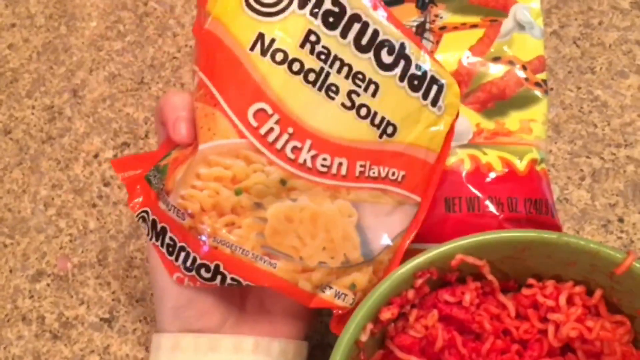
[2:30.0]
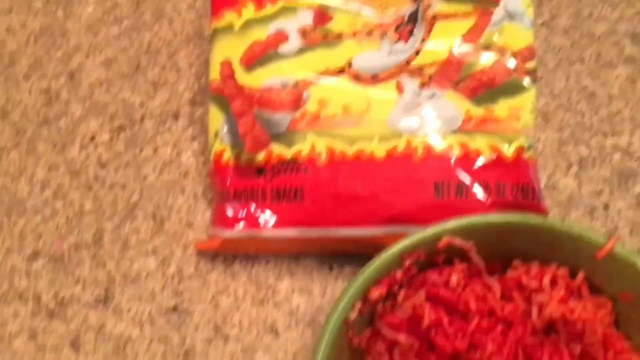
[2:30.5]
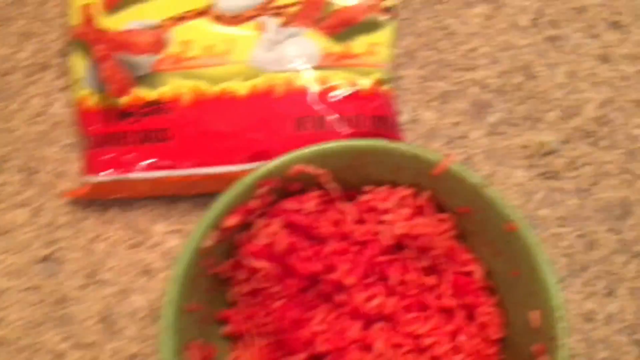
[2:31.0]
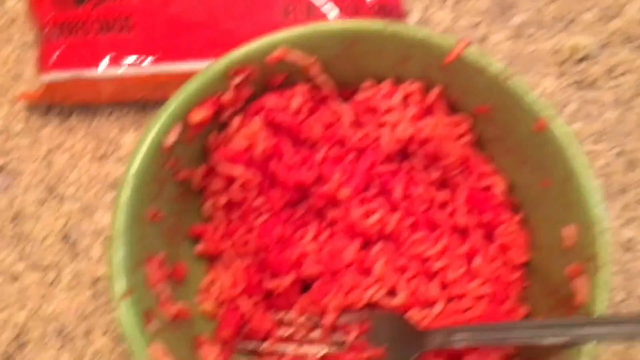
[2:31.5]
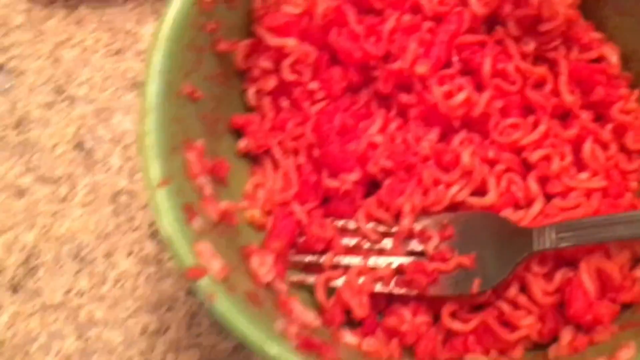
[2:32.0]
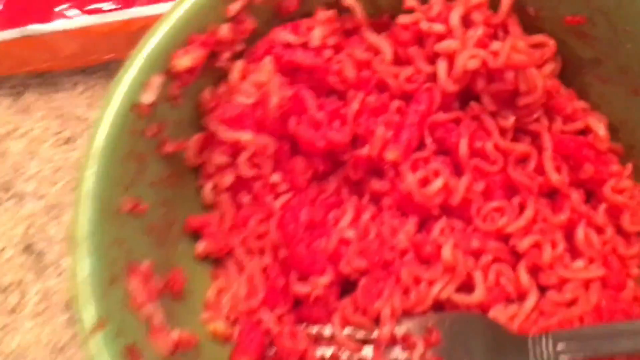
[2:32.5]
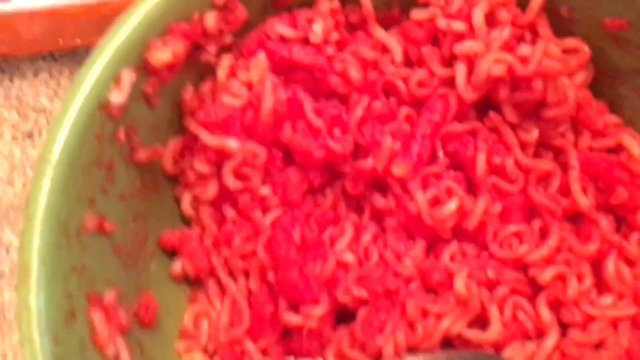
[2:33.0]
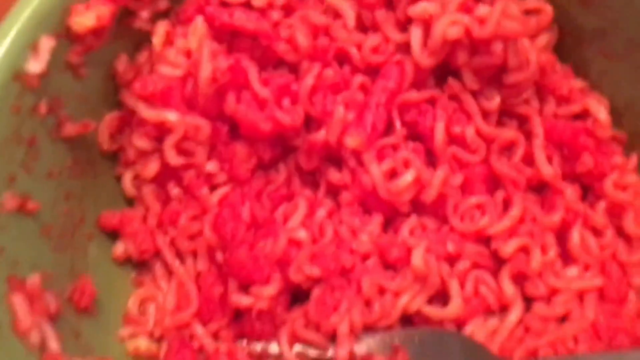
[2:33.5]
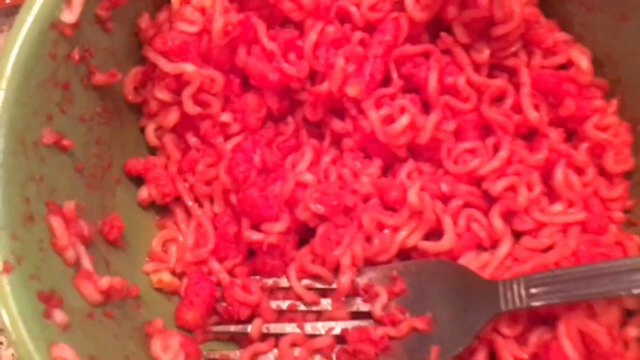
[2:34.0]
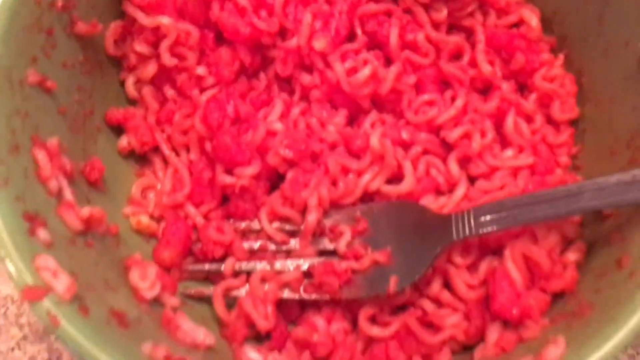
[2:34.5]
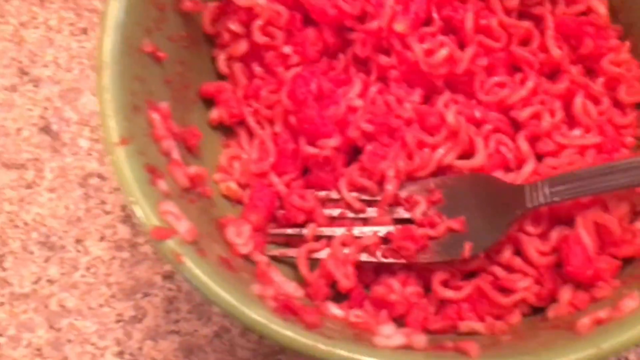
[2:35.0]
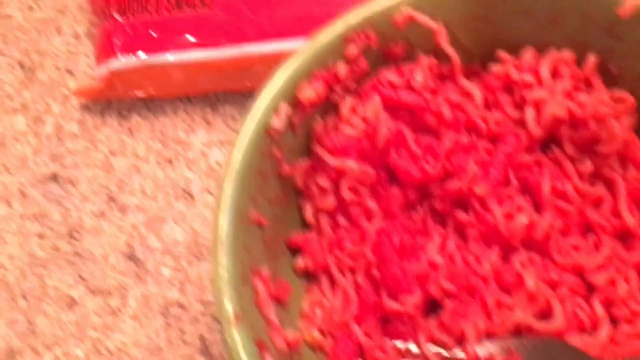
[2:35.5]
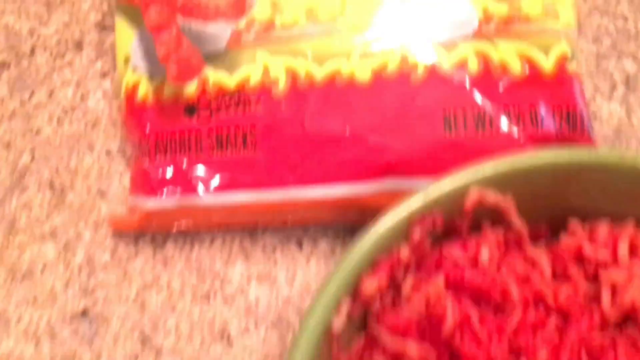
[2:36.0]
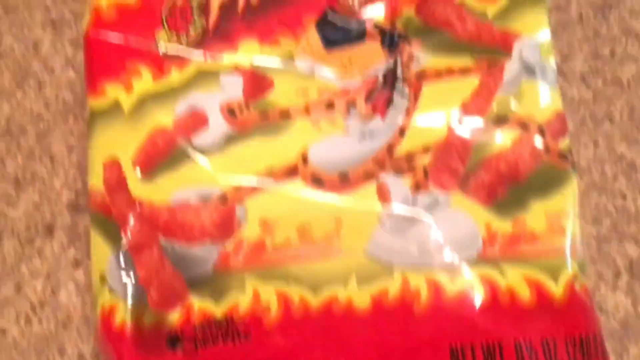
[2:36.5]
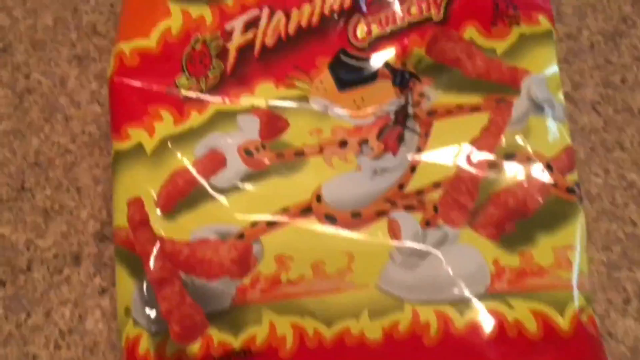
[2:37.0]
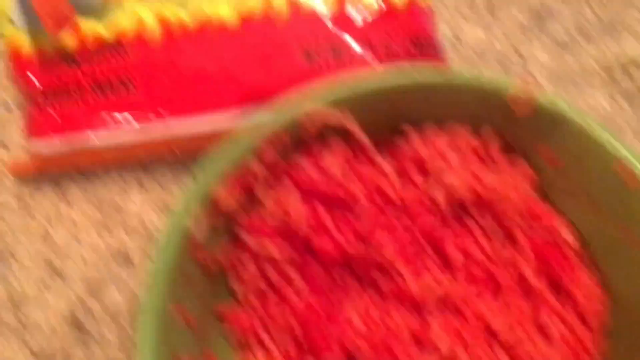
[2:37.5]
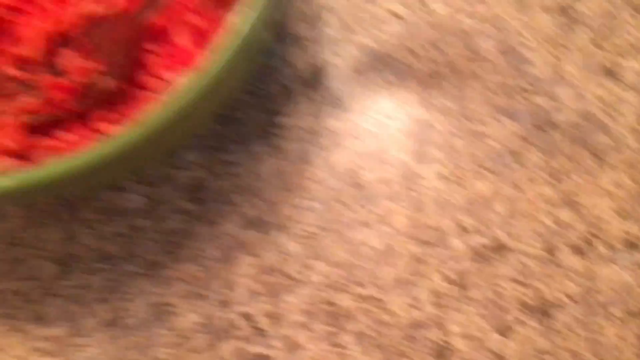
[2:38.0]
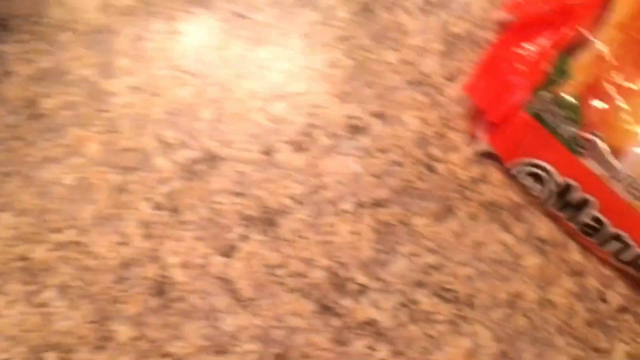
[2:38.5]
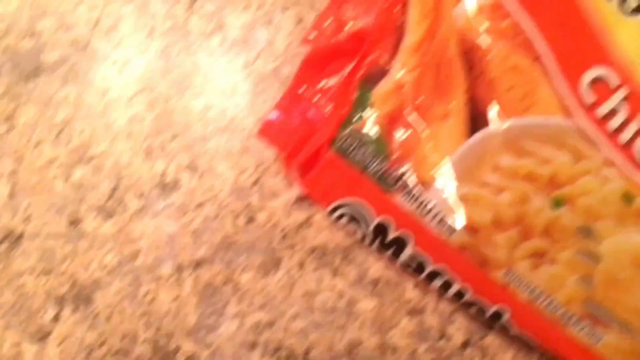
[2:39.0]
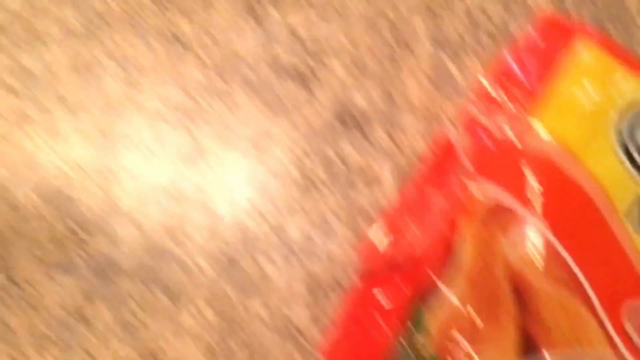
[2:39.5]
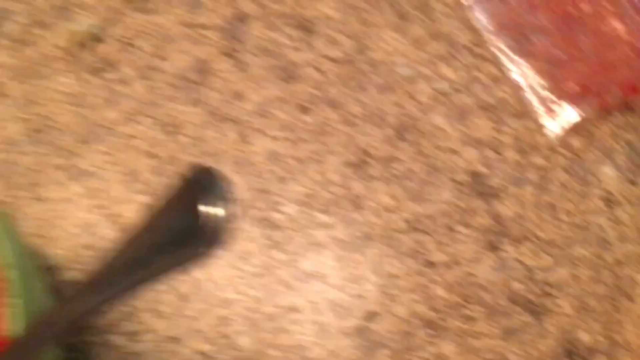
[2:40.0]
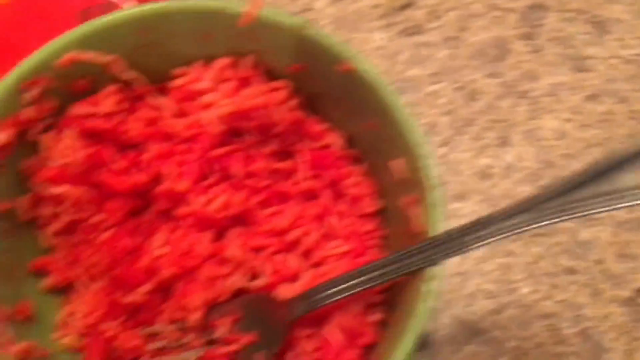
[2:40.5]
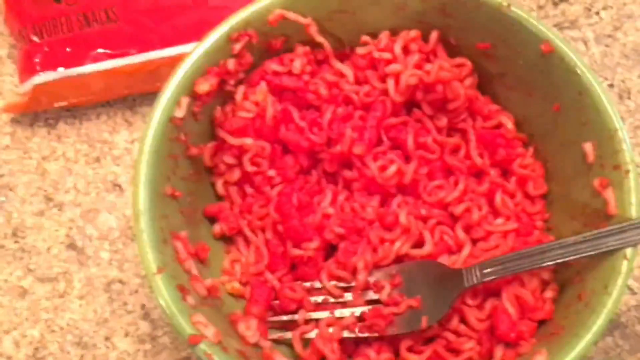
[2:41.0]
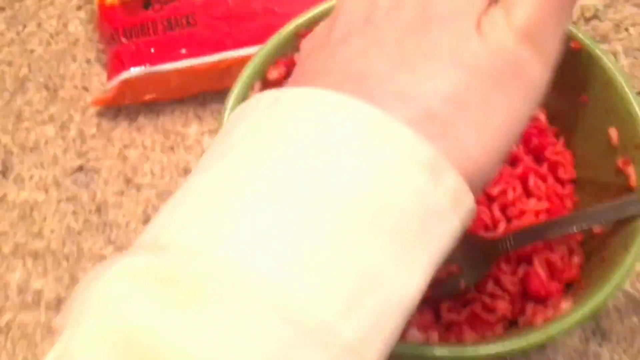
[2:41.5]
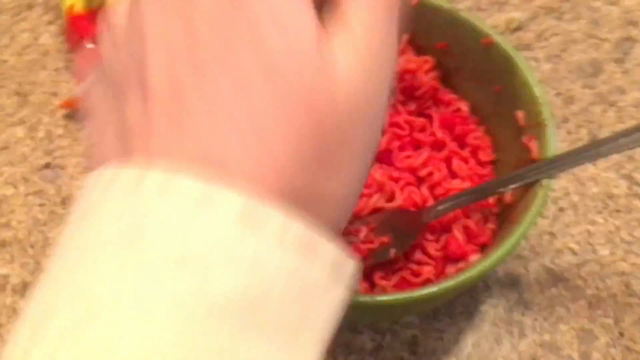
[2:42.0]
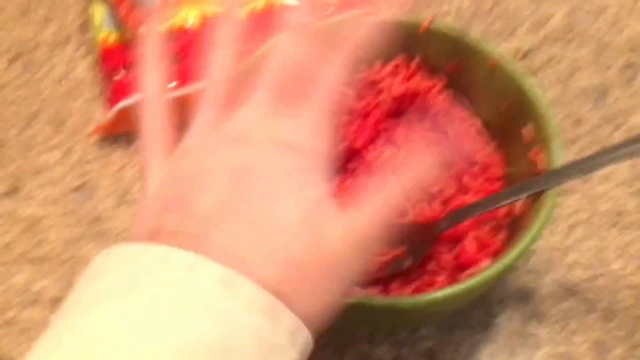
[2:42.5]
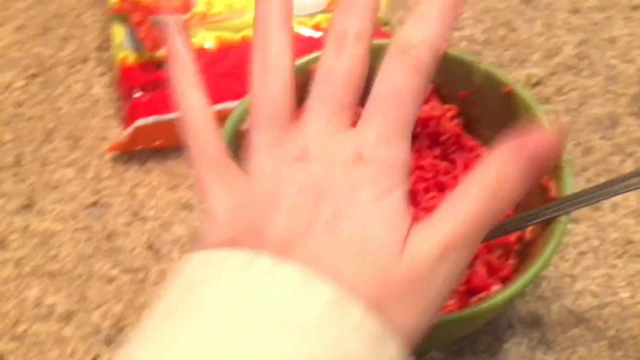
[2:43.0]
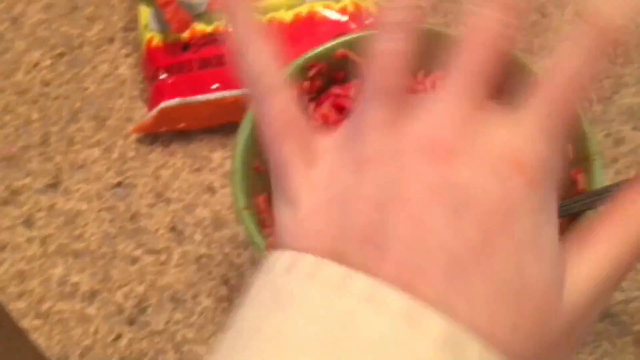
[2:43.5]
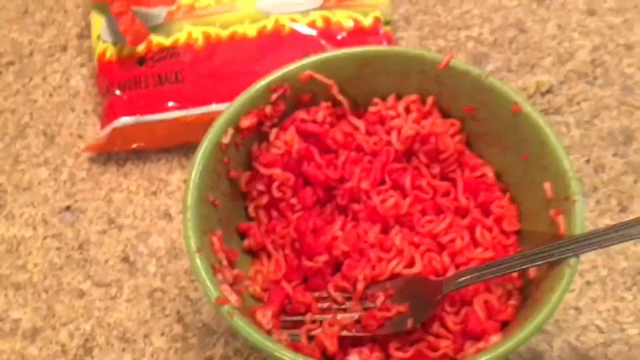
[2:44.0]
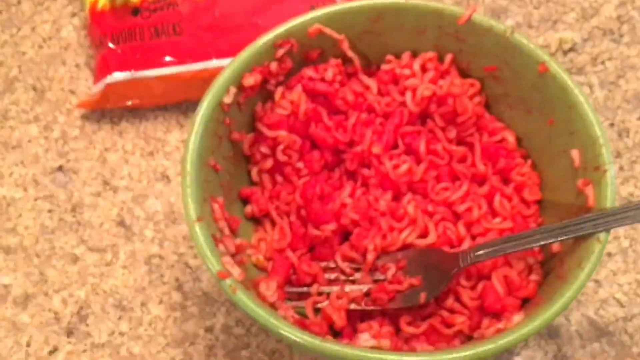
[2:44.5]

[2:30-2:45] A close-up shot shows the green ceramic cereal bowl with very red ramen noodles, the bowl and noodles taking up most of the frame, with a little of the countertop visible in the top left corner. The camera zooms in and the fork is visible. It pans away to show the Flaming Hot Cheetos to the left, pans back over the bowl with the ramen mixture, and then shows the chicken ramen noodle soup package. The hand of the girl in the yellow shirt goes over the top of the bowl and shakes. Apparently one person is filming while another makes the dish.